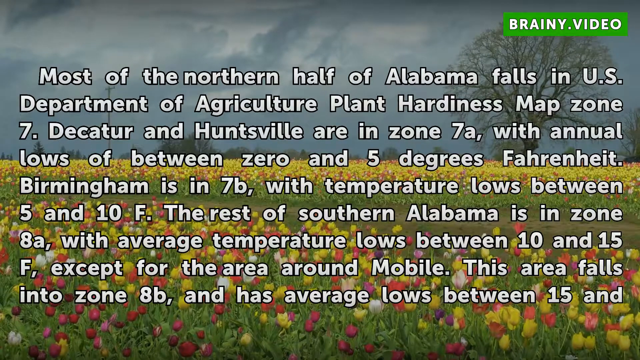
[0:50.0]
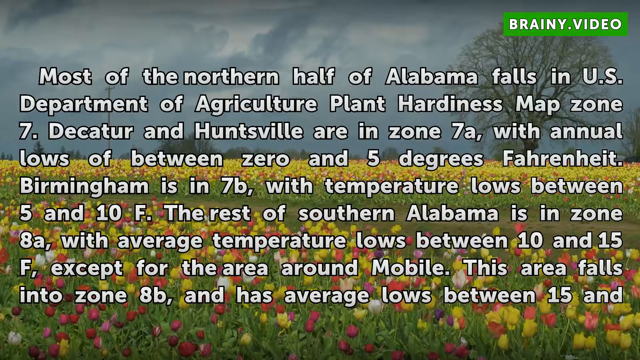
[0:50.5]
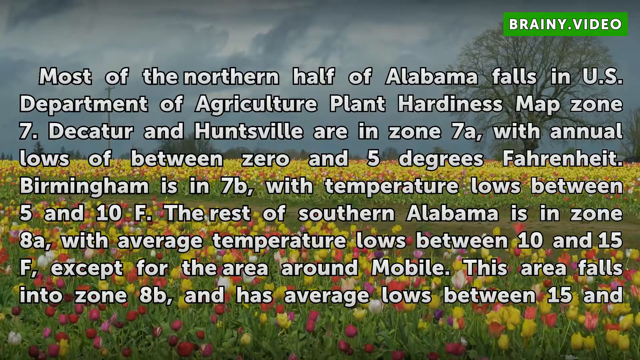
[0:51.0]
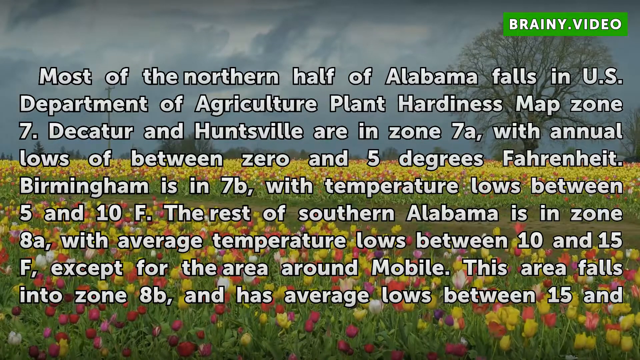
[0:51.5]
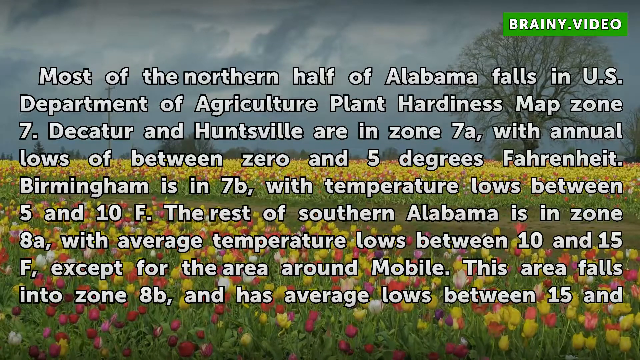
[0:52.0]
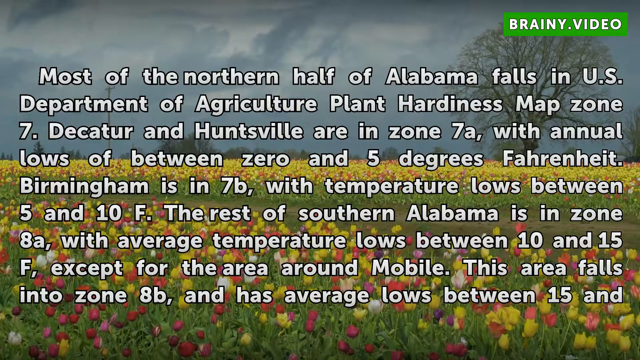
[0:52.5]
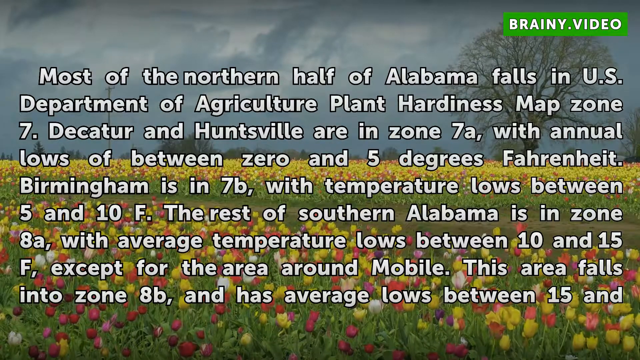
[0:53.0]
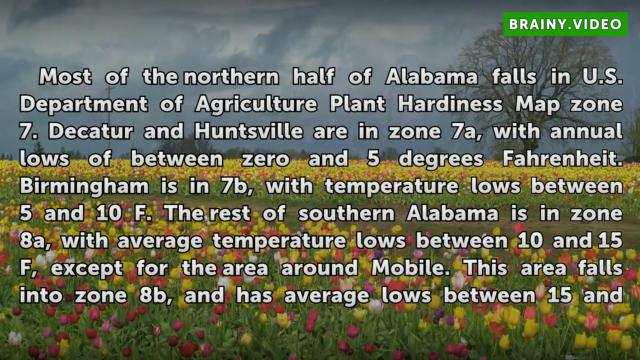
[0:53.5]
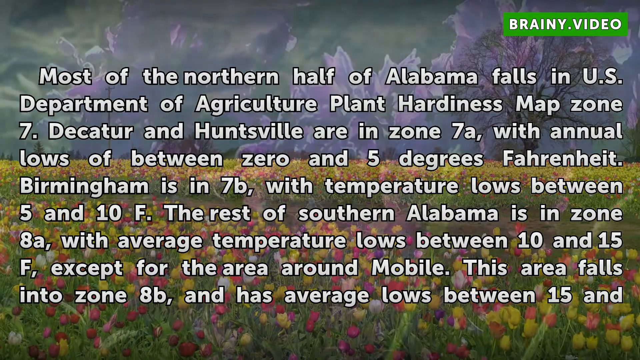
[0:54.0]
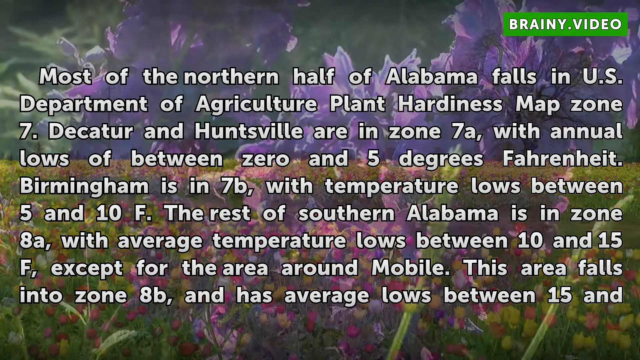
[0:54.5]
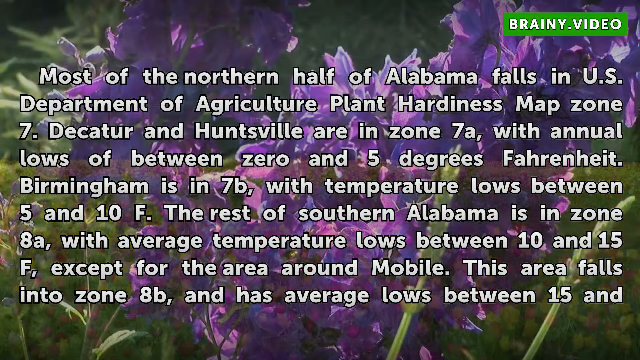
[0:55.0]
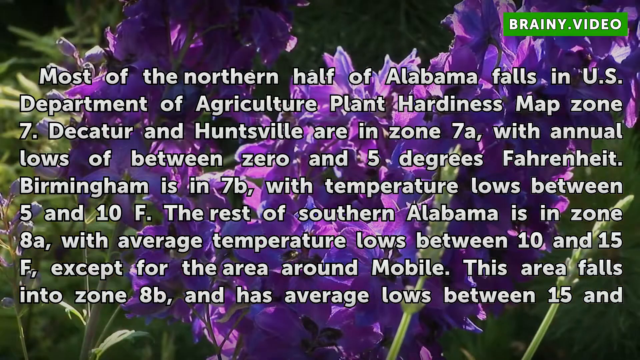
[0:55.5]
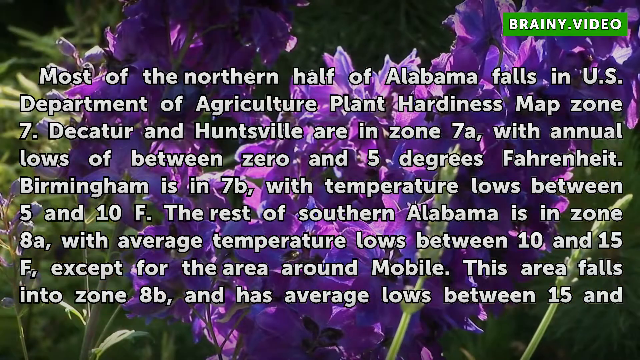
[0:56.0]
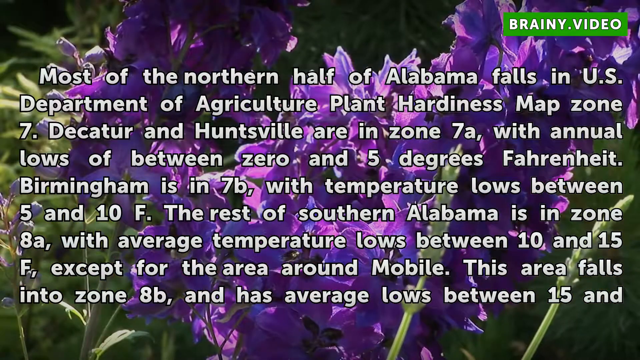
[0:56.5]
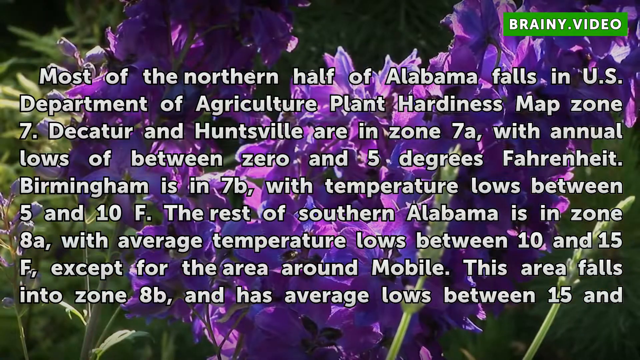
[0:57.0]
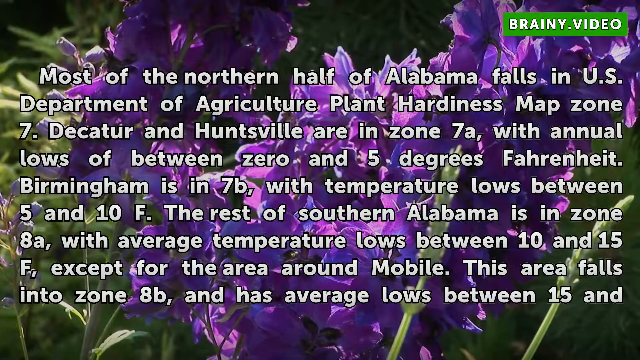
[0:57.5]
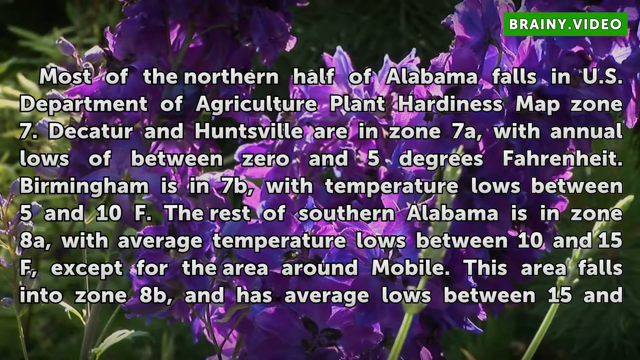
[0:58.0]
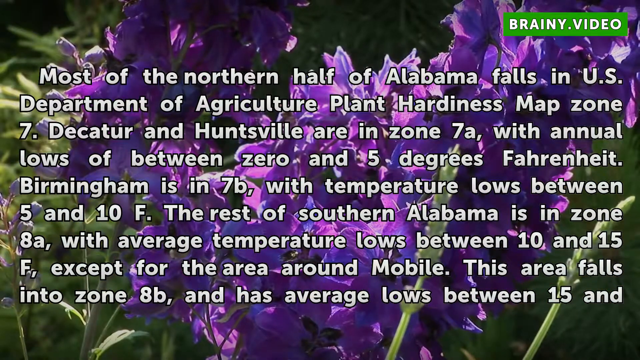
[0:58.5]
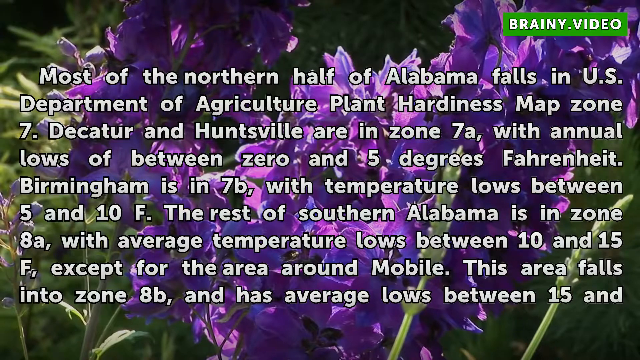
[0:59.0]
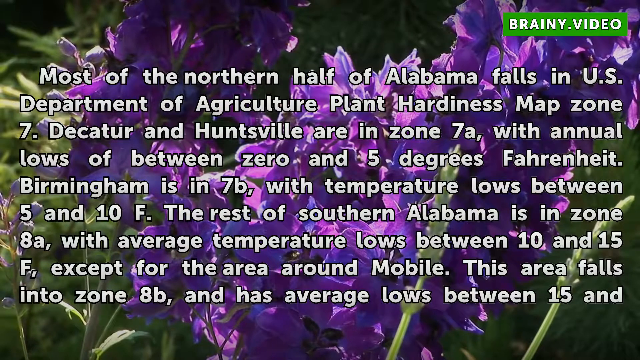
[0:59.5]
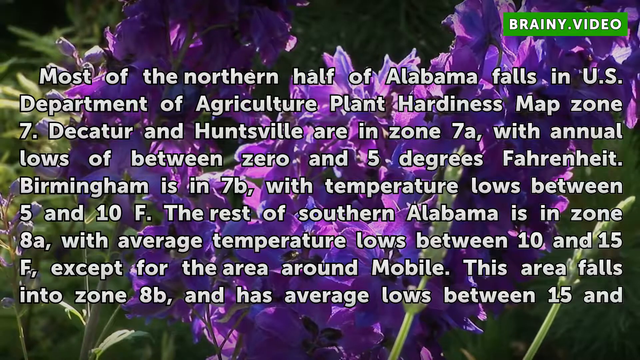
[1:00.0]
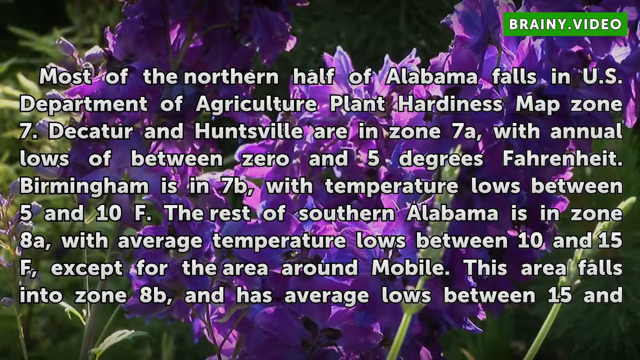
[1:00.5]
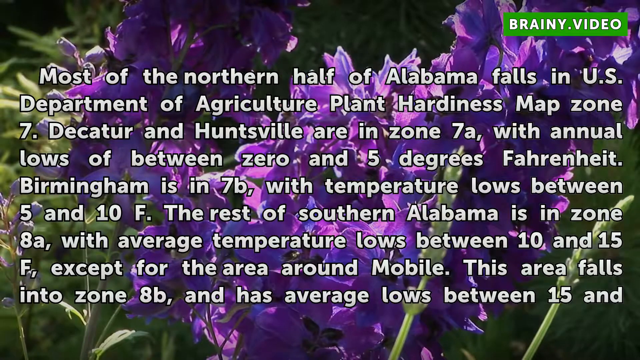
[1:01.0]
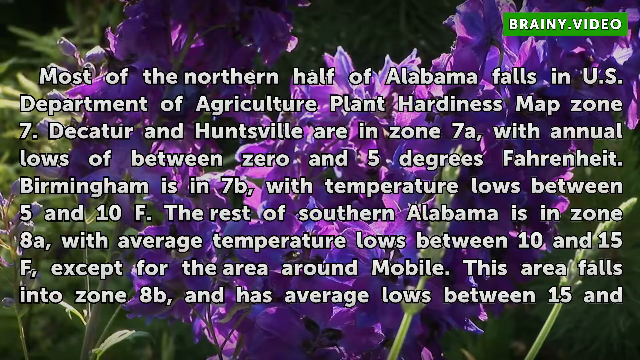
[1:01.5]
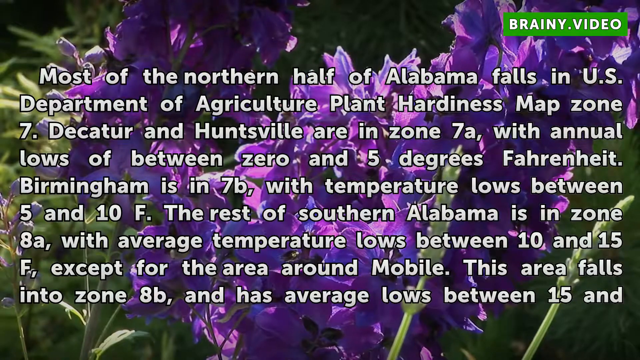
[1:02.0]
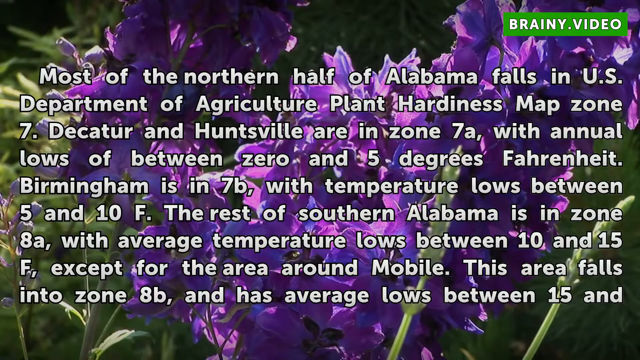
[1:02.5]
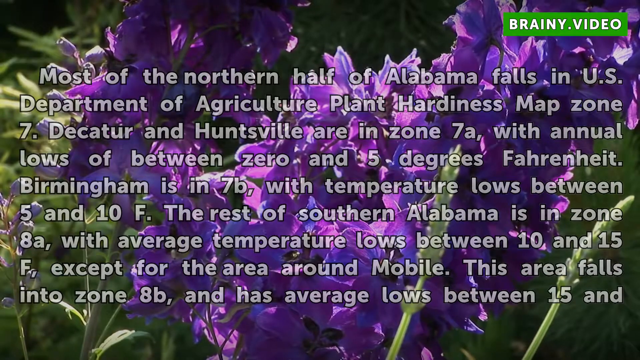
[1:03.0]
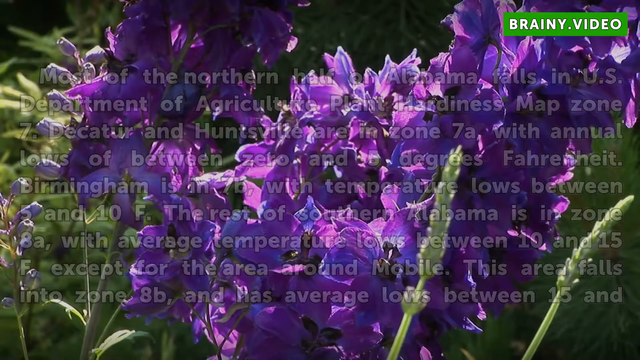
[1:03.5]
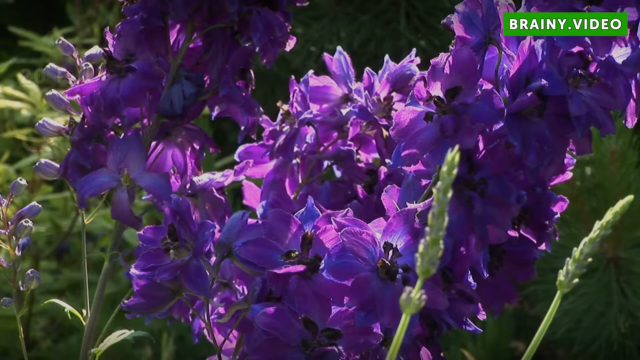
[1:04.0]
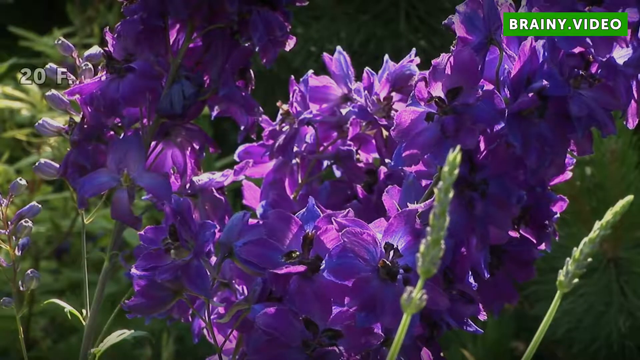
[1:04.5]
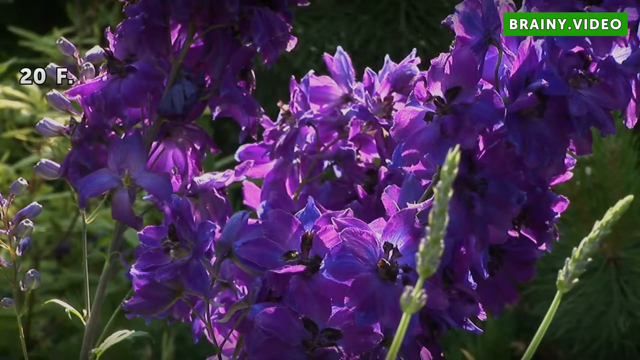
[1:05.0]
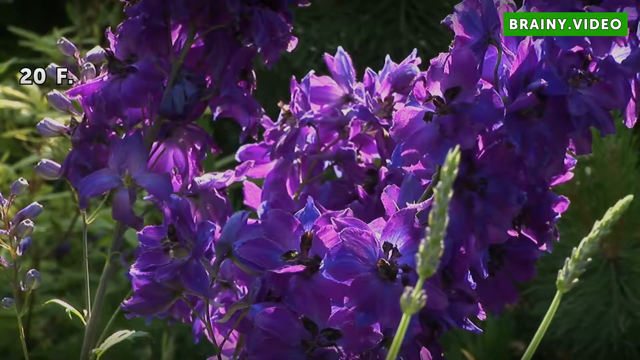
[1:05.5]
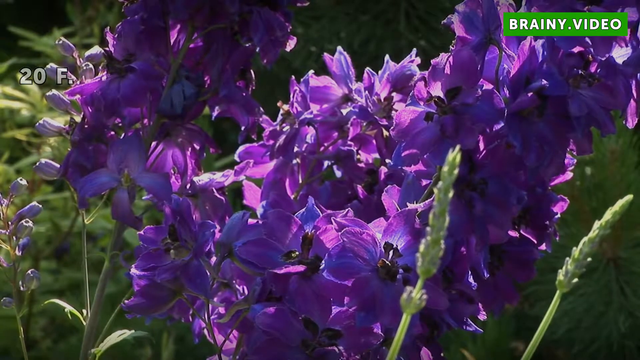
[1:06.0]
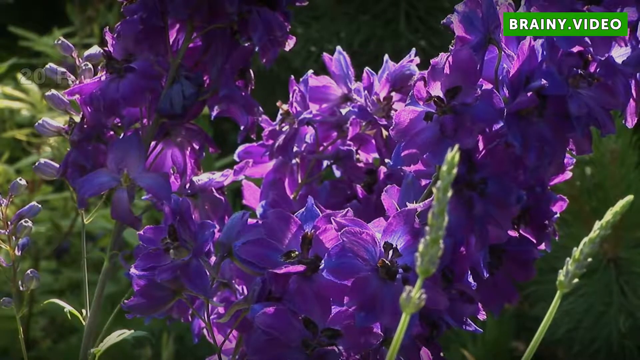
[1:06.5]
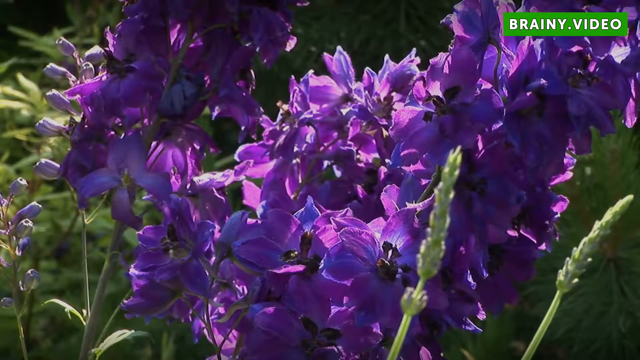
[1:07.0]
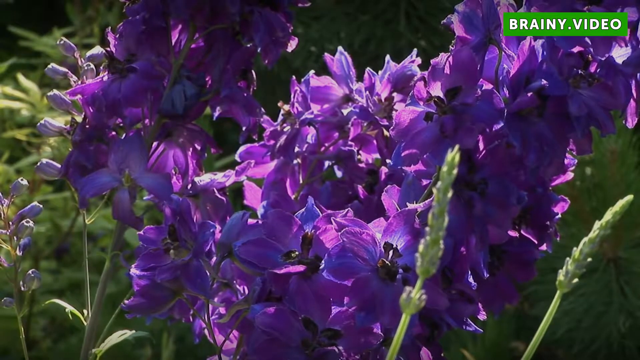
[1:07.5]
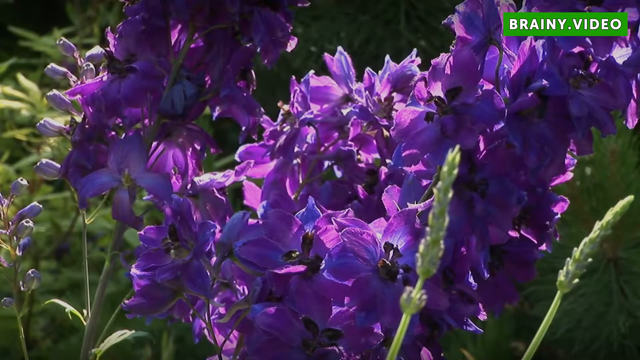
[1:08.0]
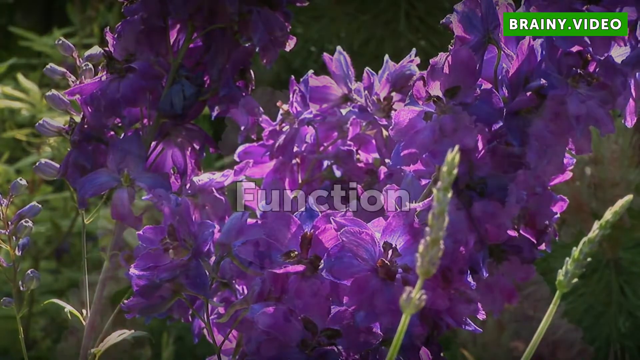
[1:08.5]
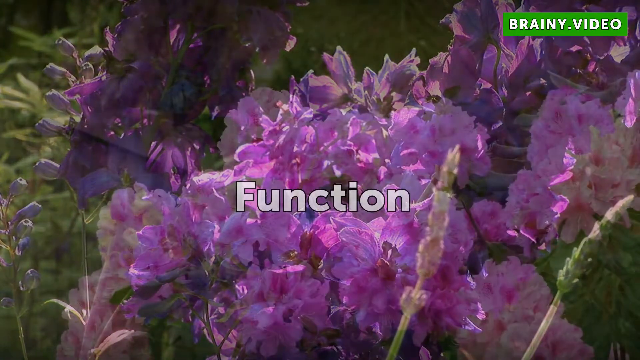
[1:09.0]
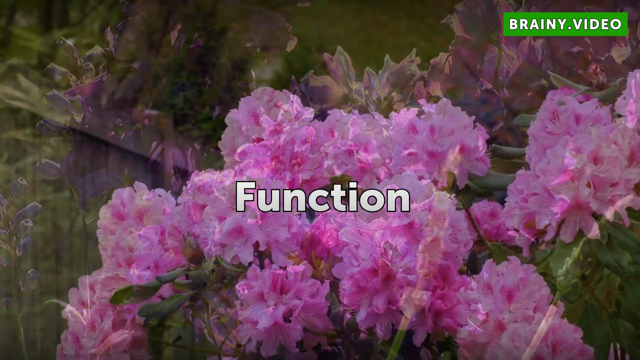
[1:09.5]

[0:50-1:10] The same text remains fixed on the screen. After several seconds, the photo in the background fades into a different photo: a close-up of dense, frilly purple flowers, possibly sweet peas or something similar, though they are hard to identify with the text over them. Hints of greenery from other plants are visible in the background. The text then disappears, leaving just the image of the purple flowers, which could be hyacinths or foxgloves, with two heads of wheat or something similar to the right of the screen. White text appears in the top left corner reading "20 degrees Fahrenheit", which seems to be the end of the text that was cut off earlier. The flowers move slightly in the breeze. This photo then fades into another photo of frilly pink flowers clustered together in the centre of the screen.